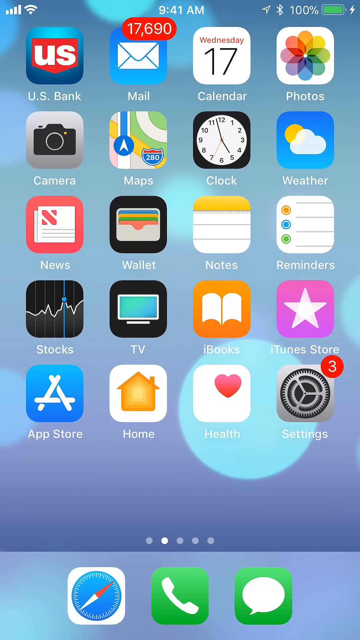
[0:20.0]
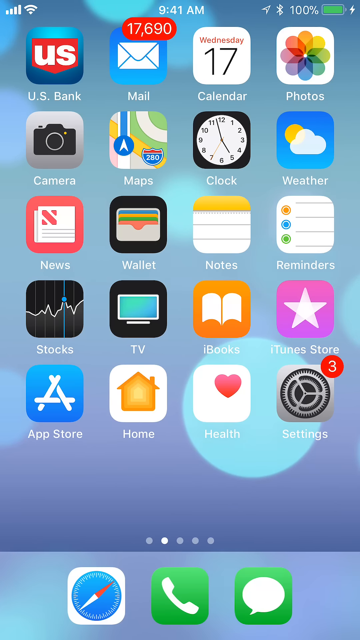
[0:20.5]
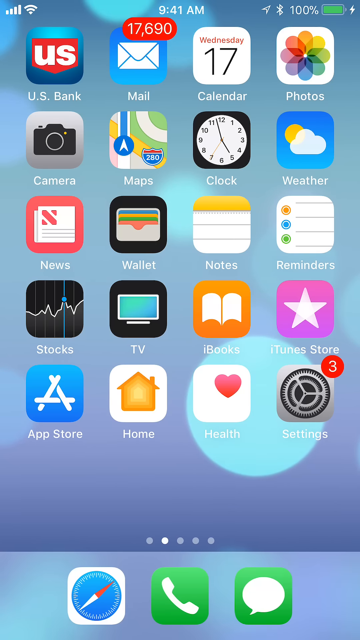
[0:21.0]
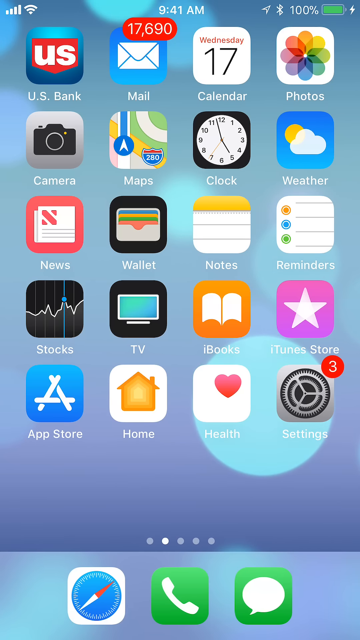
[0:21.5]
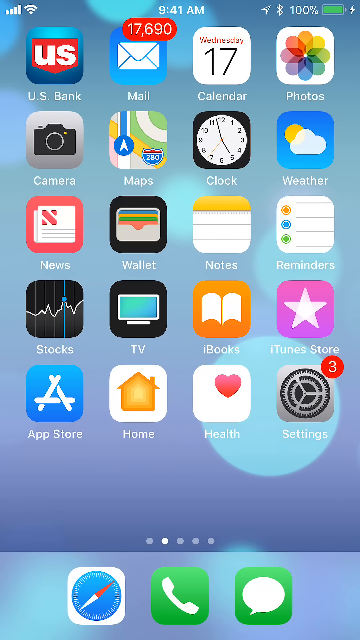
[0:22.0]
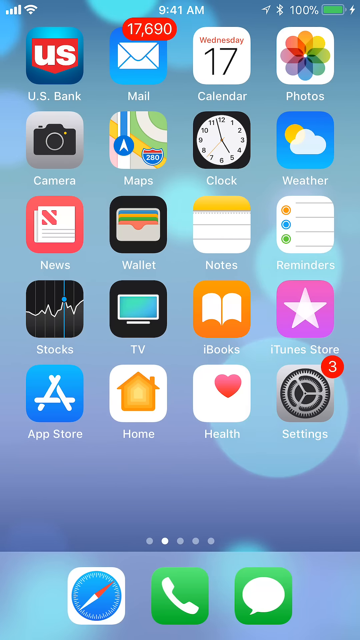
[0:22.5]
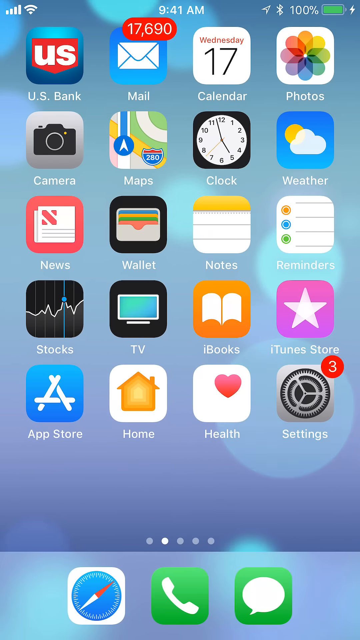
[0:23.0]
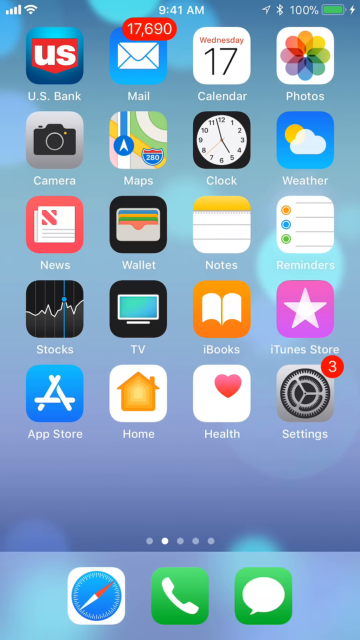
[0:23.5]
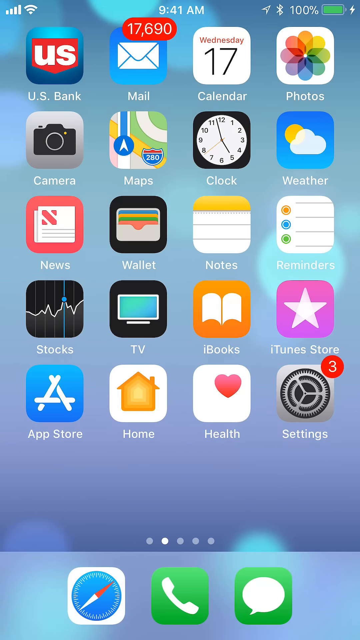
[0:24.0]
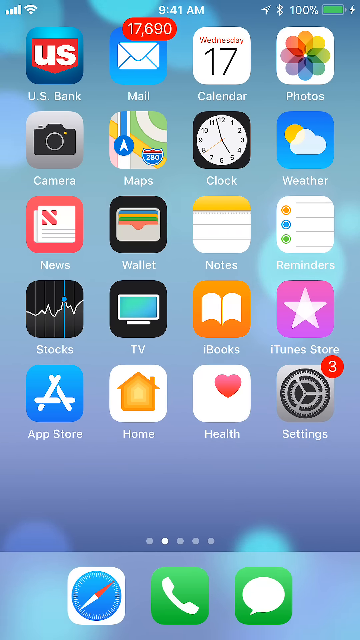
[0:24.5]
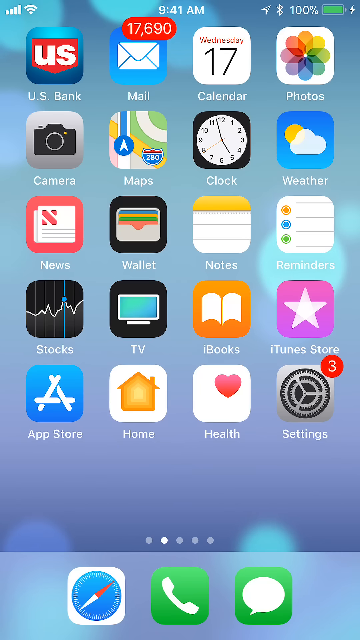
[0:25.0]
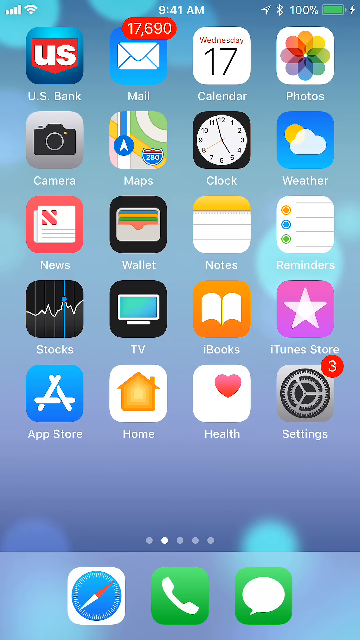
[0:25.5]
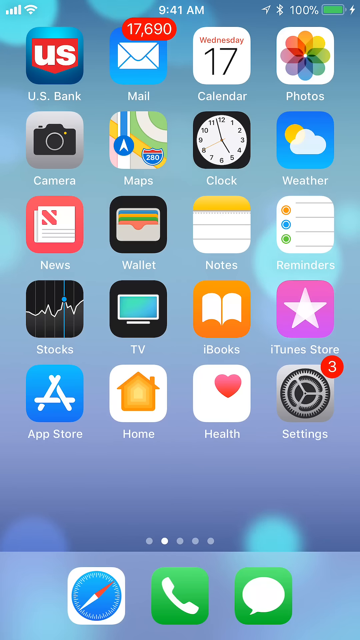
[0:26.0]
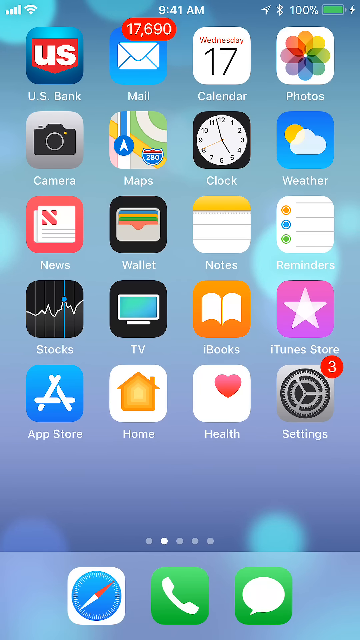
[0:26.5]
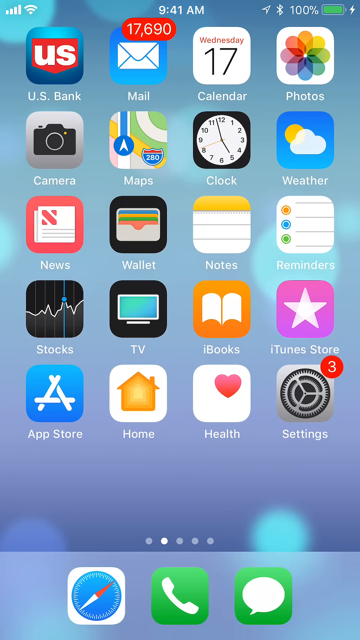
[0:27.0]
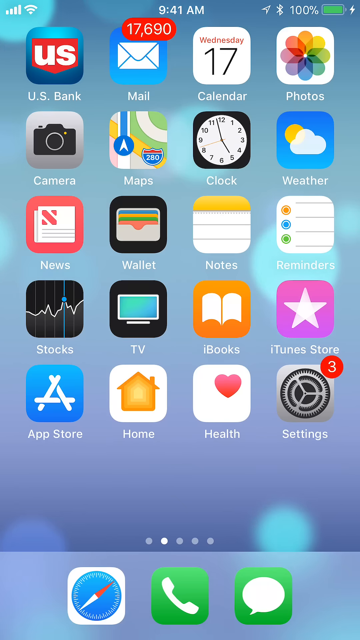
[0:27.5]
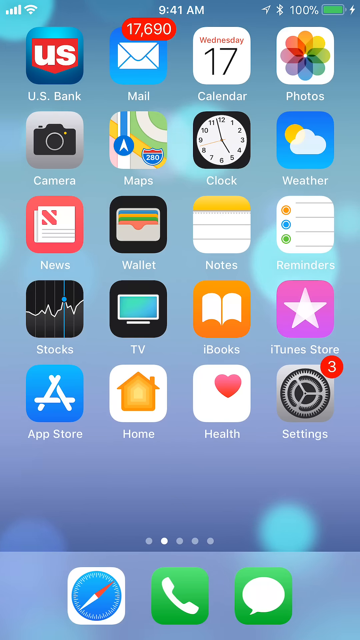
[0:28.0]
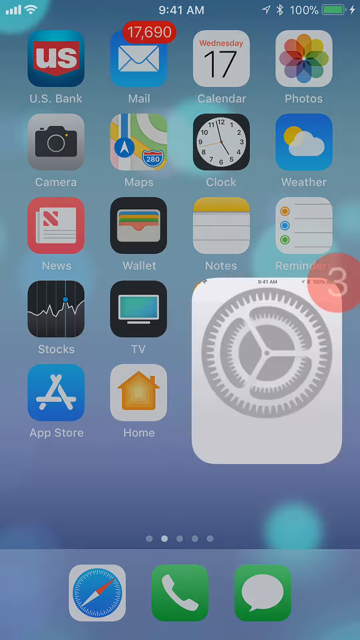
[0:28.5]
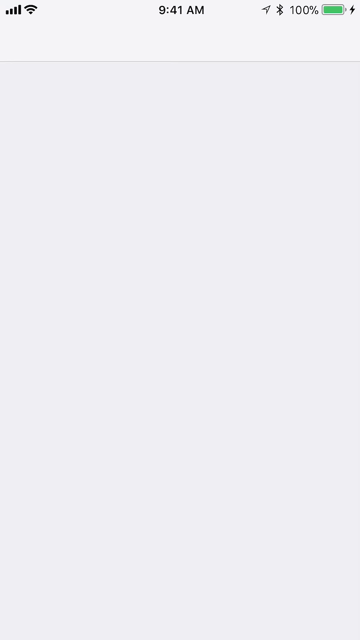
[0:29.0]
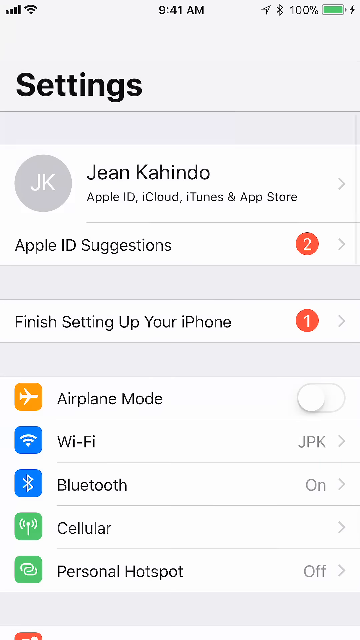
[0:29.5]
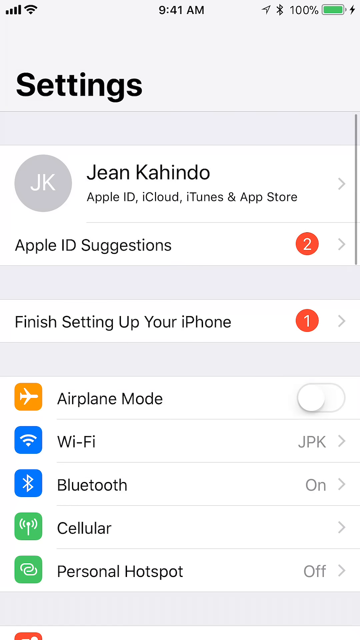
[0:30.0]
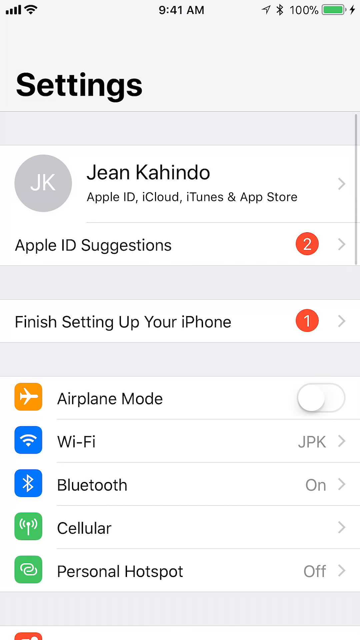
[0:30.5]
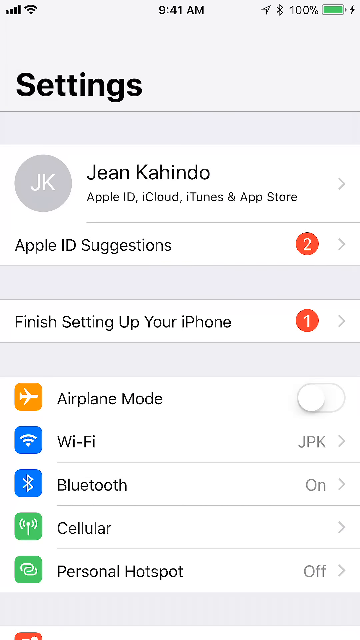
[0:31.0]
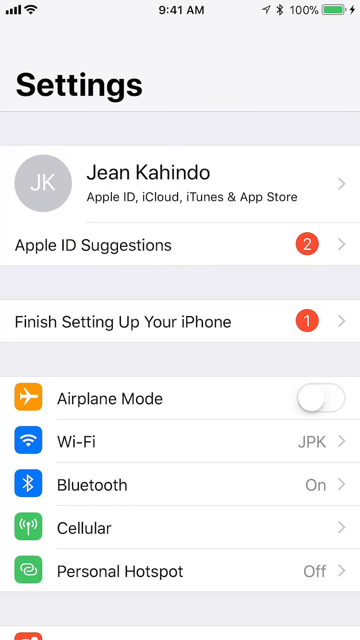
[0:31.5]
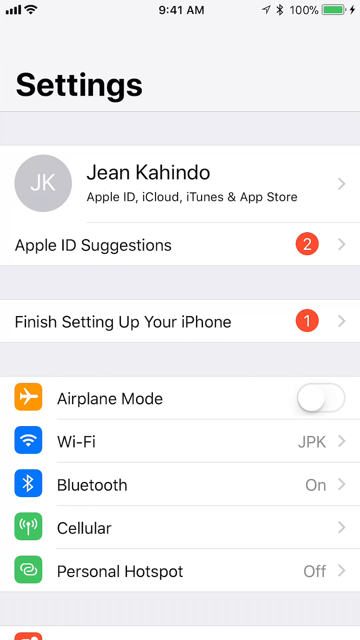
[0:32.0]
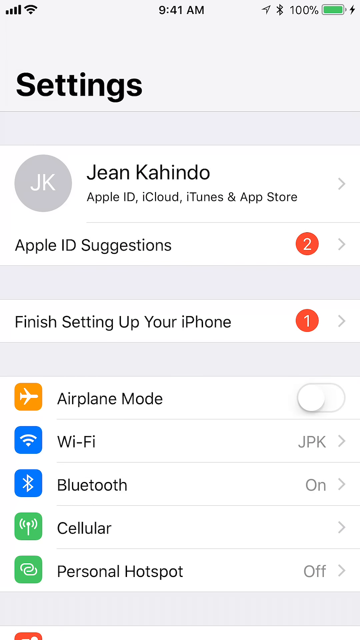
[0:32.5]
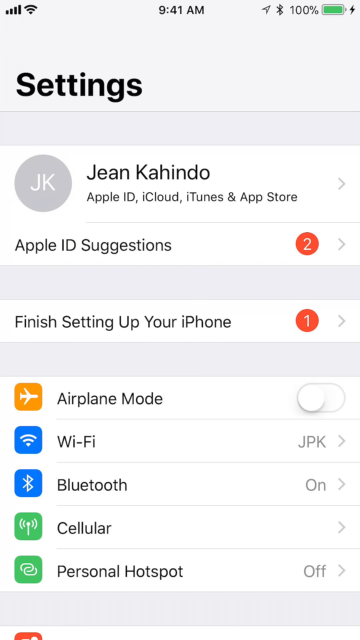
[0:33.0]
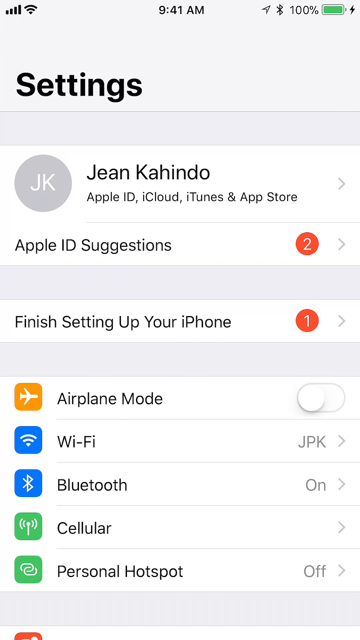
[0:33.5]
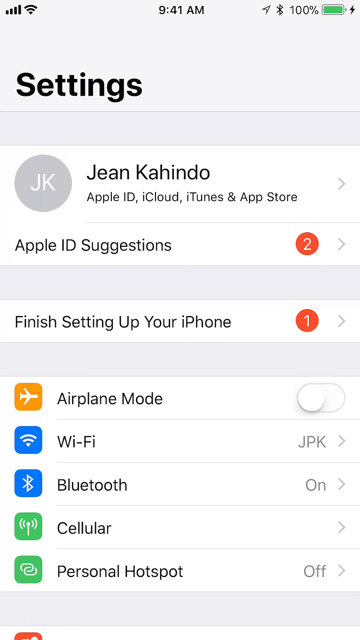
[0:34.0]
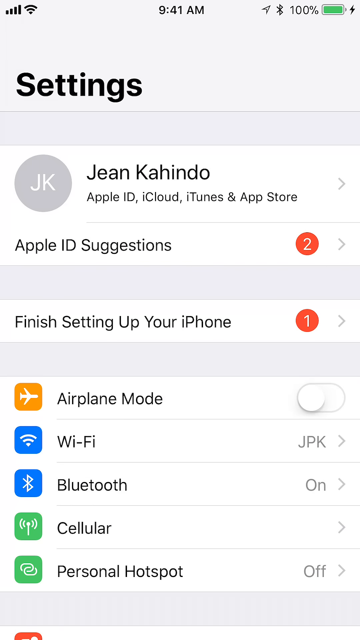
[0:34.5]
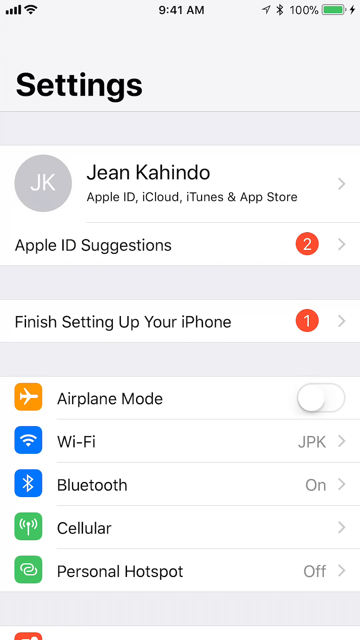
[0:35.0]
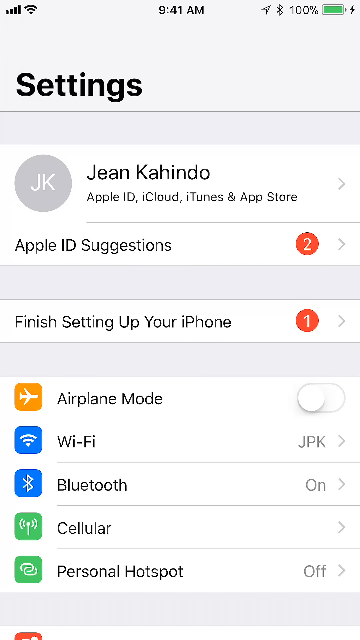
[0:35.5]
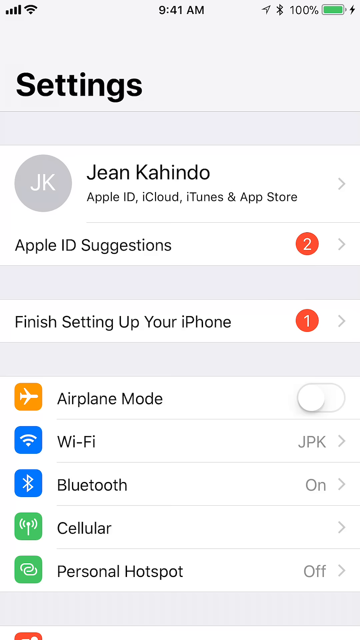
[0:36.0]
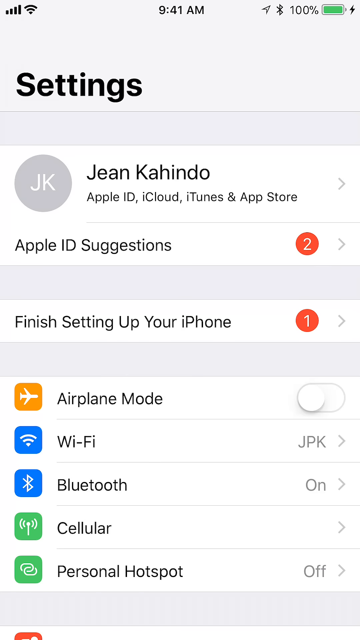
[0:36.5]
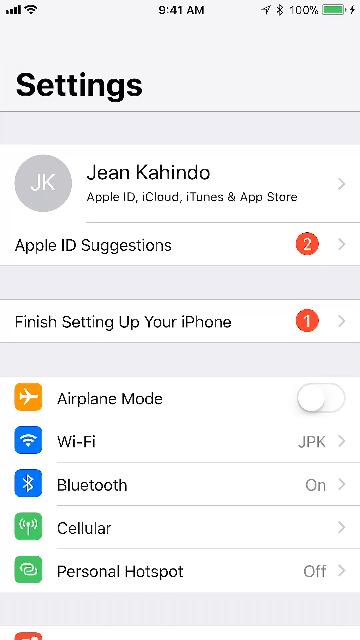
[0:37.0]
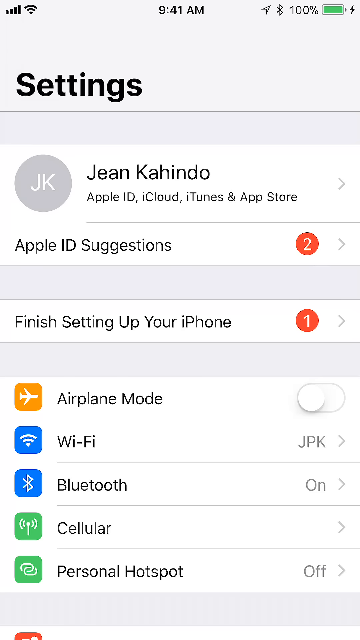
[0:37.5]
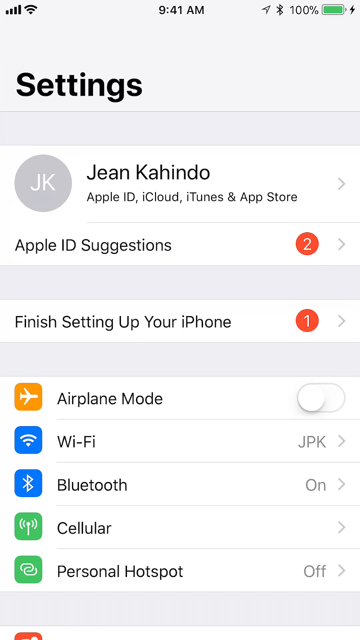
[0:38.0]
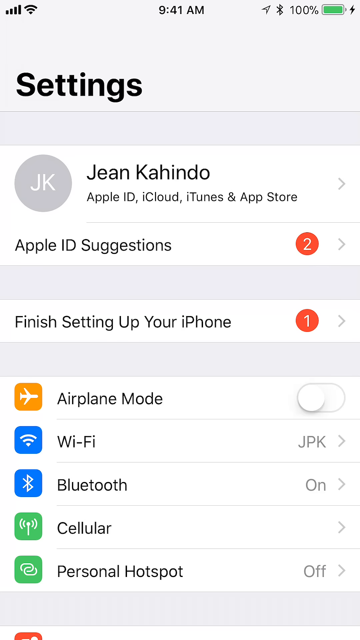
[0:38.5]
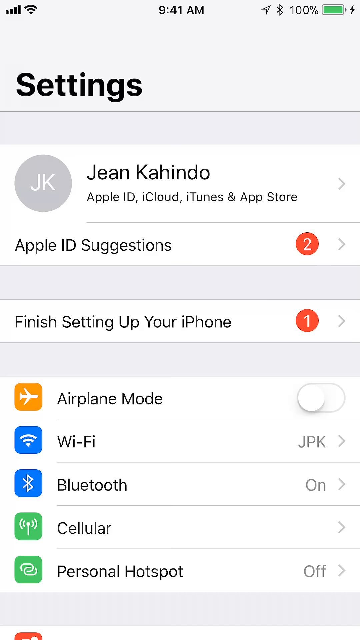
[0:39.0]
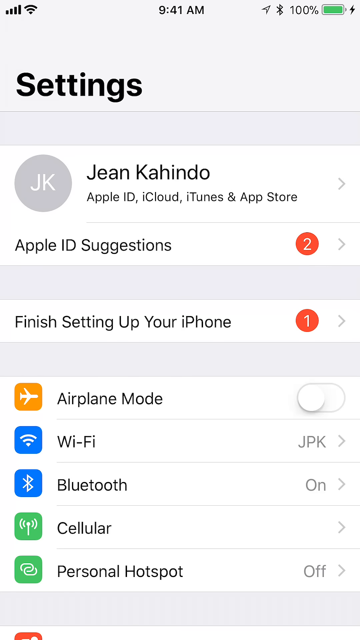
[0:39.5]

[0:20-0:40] What appears to be an iPhone screen shows the battery life in the top right and the time, "9:41 AM". On the left side there is the Wi-Fi symbol or internet connection icon. The phone then seems to navigate to another screen with "Settings" at the top in black. Underneath is the person's name, "Gene Cojindo", and below that, in black text, "Apple ID, iCloud, iTunes, and App Store". Under that it says "Apple ID suggestions", with the number 2 to the right surrounded by a red circle. Below that it says "finish setting up your iPhone", with the number 1, also in a circle. Underneath that is "Airplane mode", with an icon next to it showing a white airplane on an orange background.